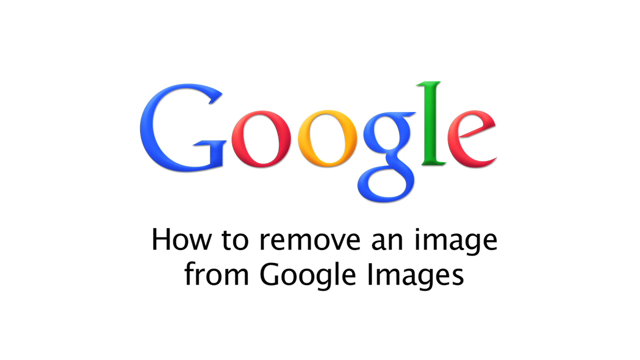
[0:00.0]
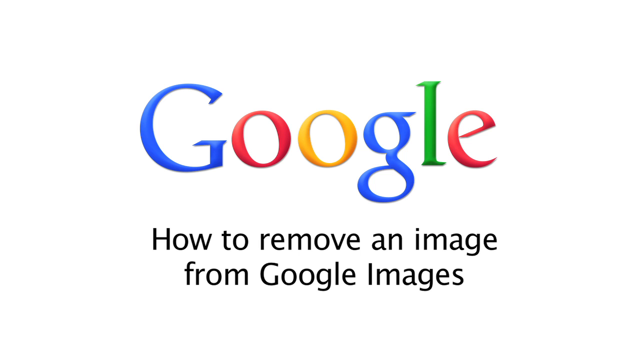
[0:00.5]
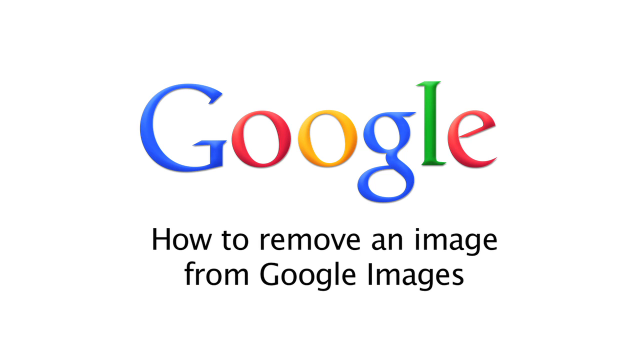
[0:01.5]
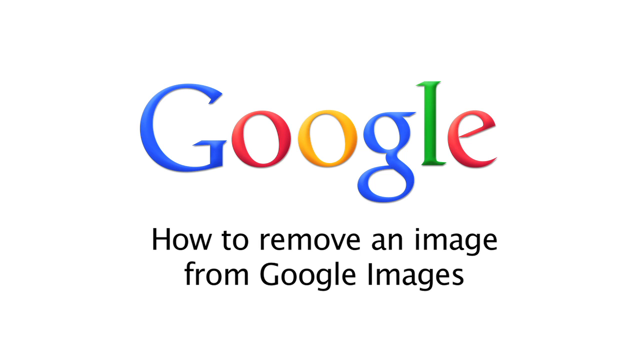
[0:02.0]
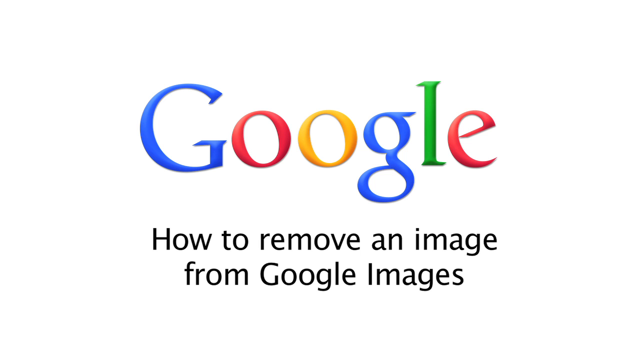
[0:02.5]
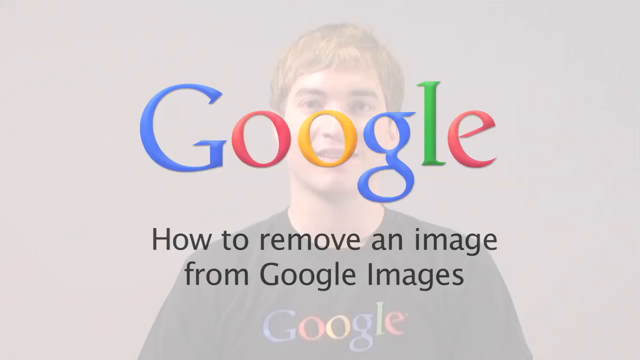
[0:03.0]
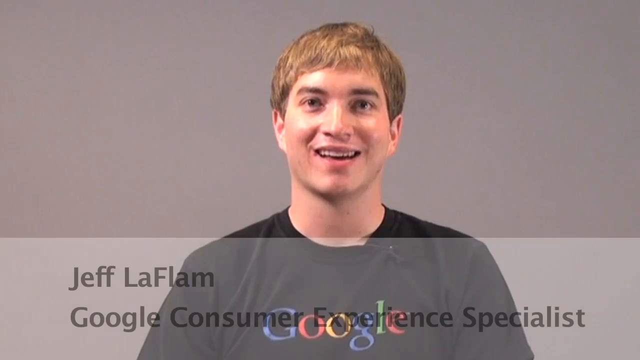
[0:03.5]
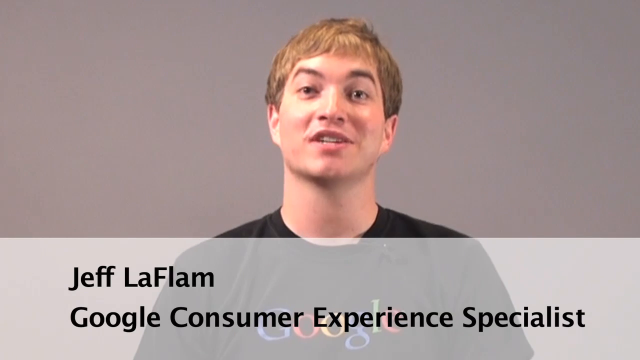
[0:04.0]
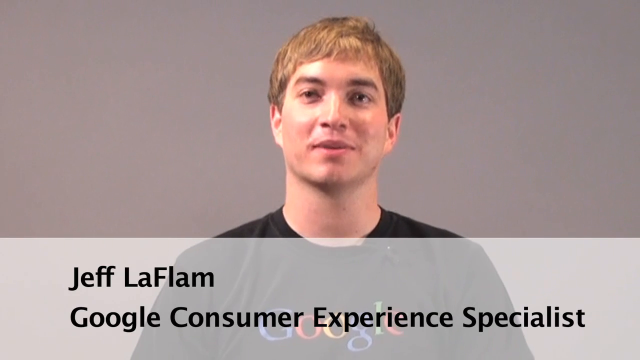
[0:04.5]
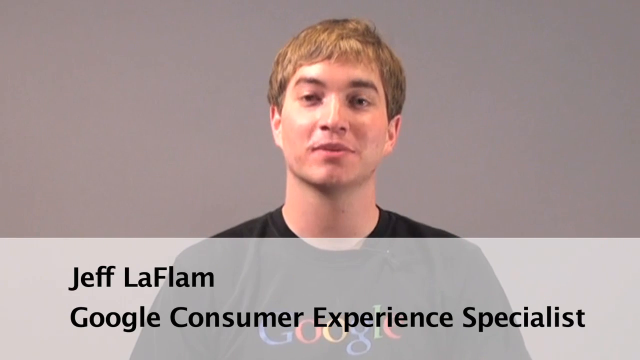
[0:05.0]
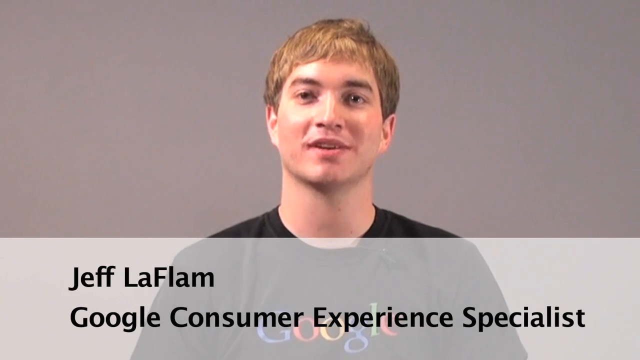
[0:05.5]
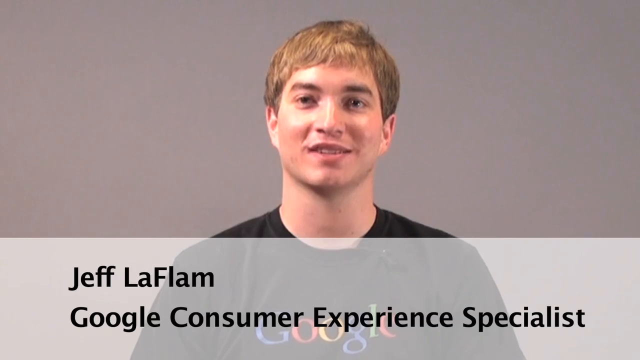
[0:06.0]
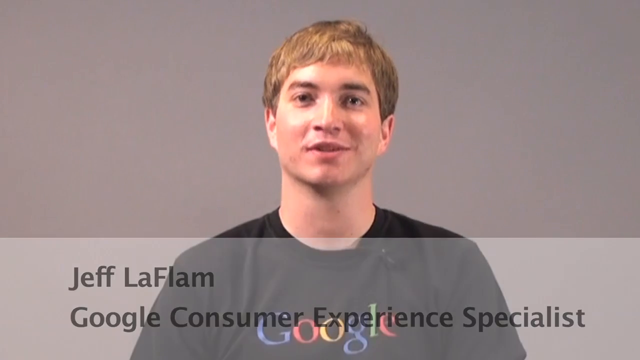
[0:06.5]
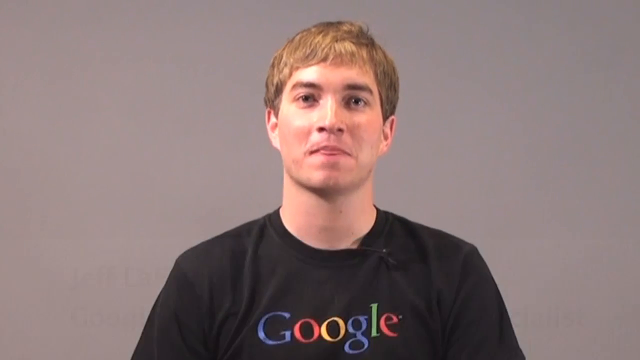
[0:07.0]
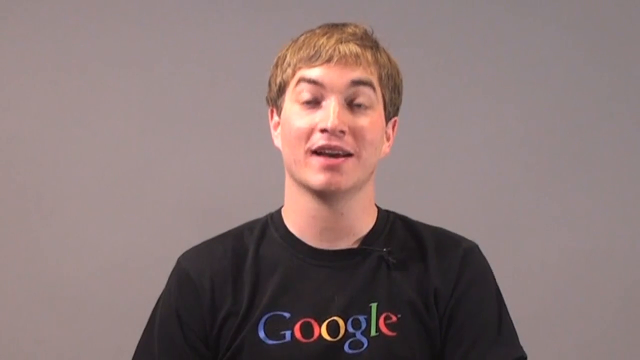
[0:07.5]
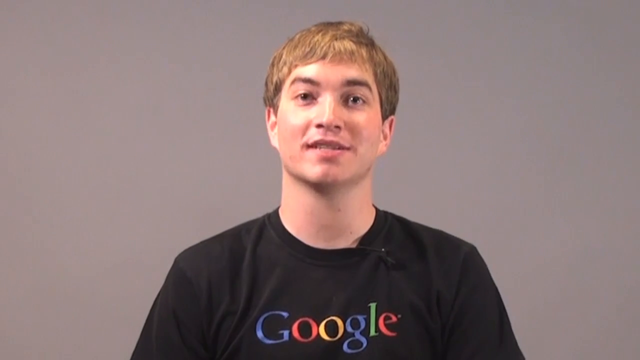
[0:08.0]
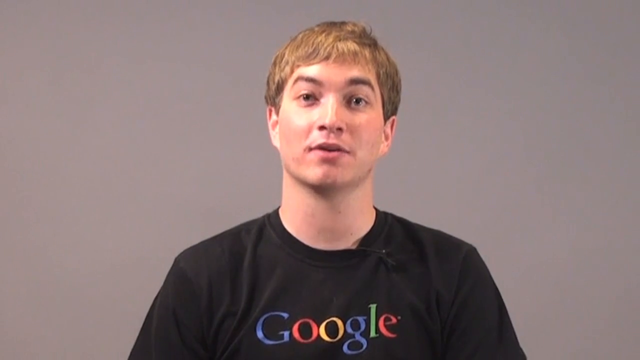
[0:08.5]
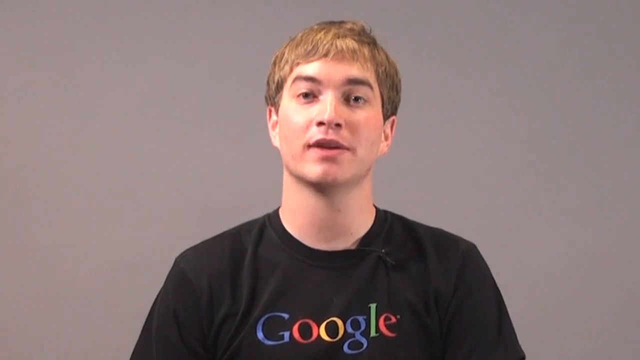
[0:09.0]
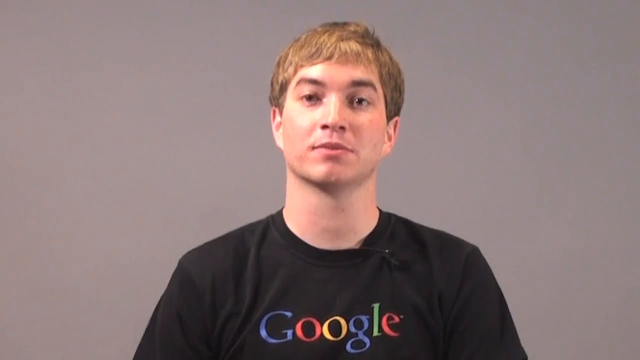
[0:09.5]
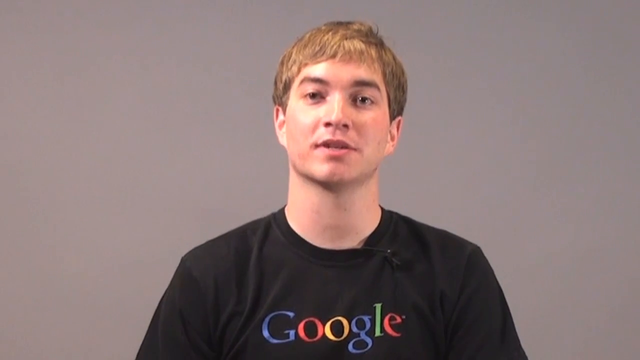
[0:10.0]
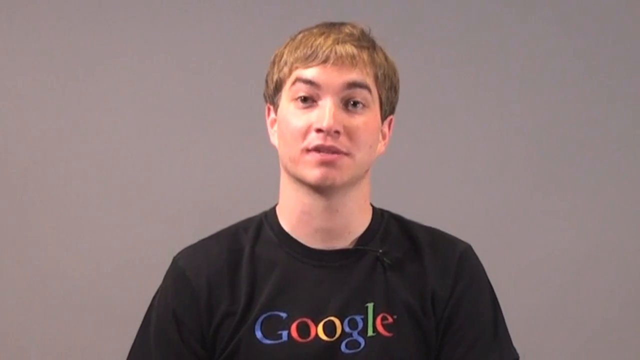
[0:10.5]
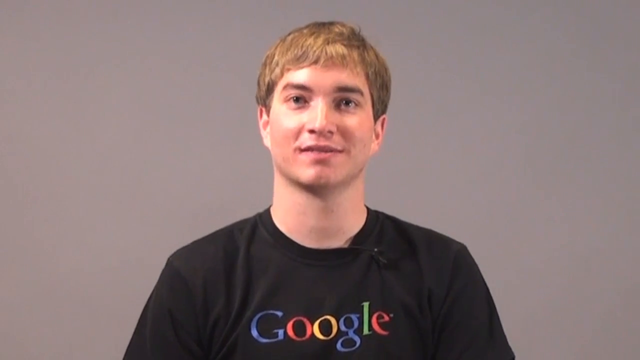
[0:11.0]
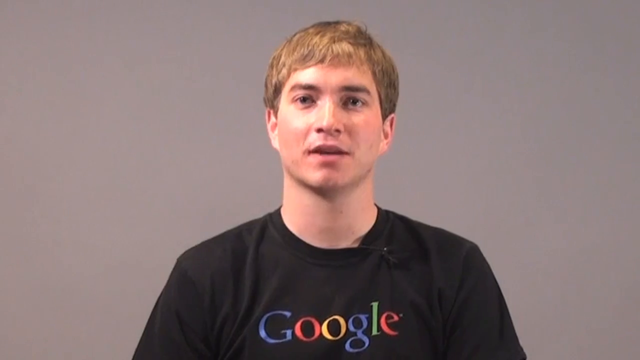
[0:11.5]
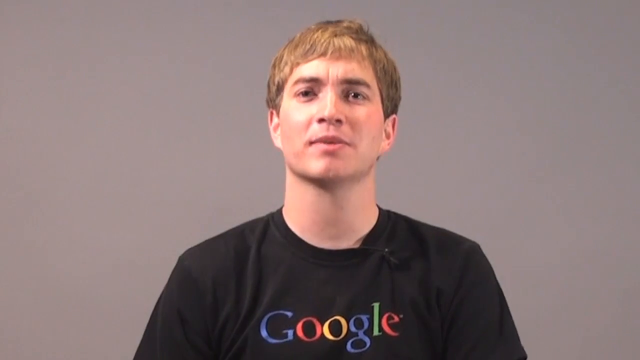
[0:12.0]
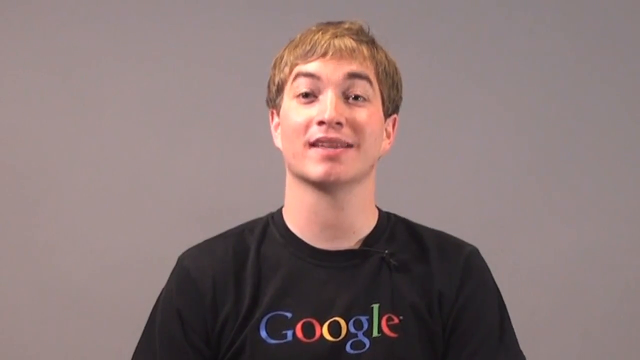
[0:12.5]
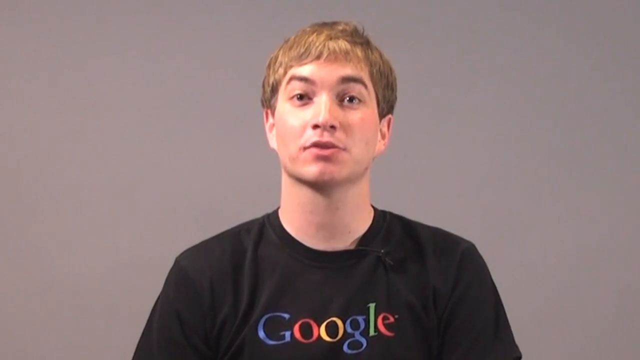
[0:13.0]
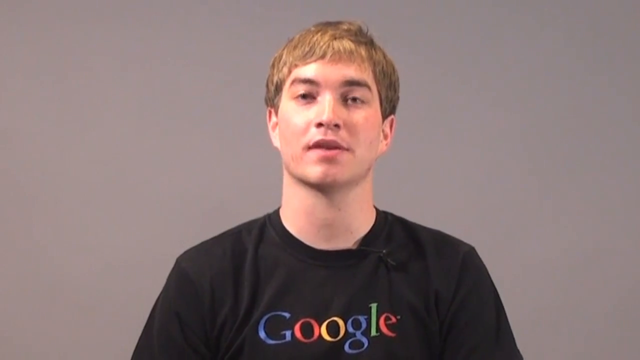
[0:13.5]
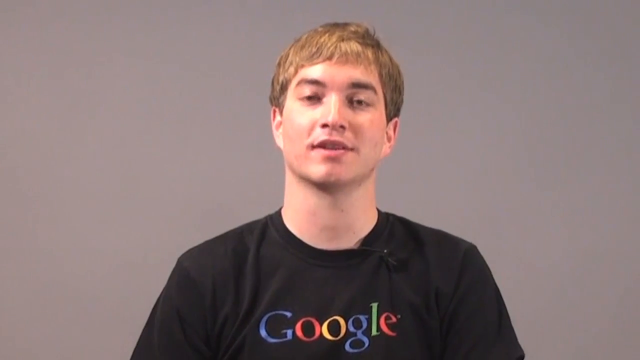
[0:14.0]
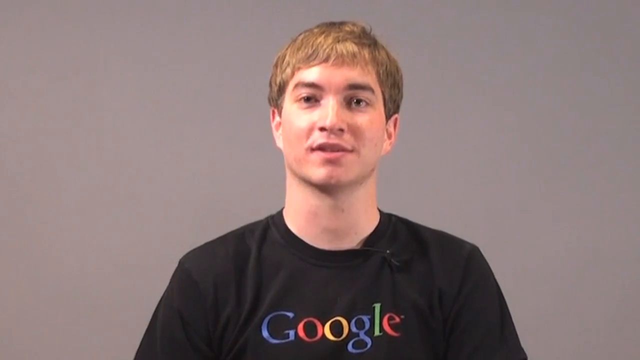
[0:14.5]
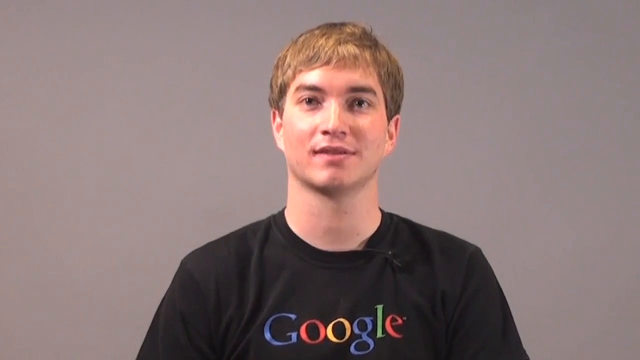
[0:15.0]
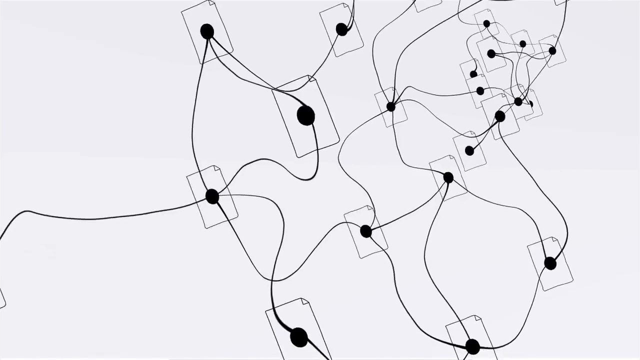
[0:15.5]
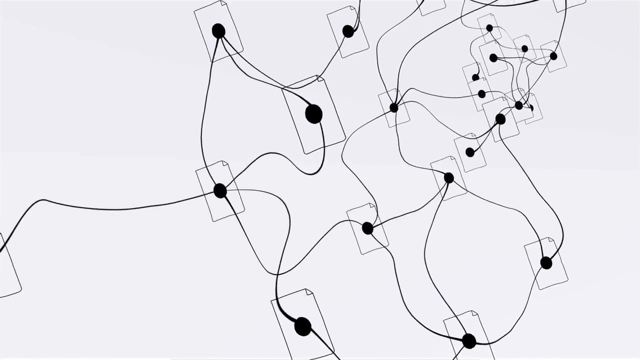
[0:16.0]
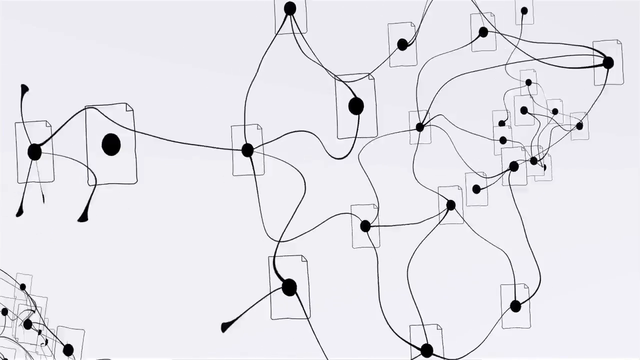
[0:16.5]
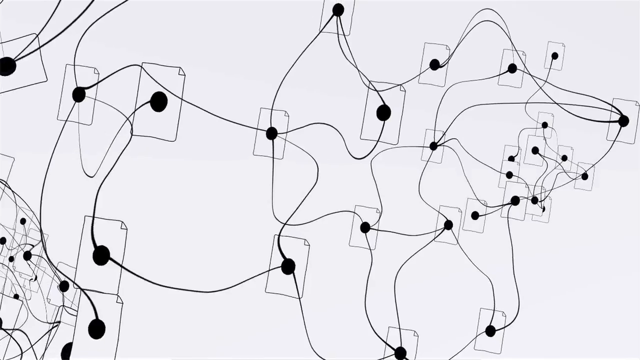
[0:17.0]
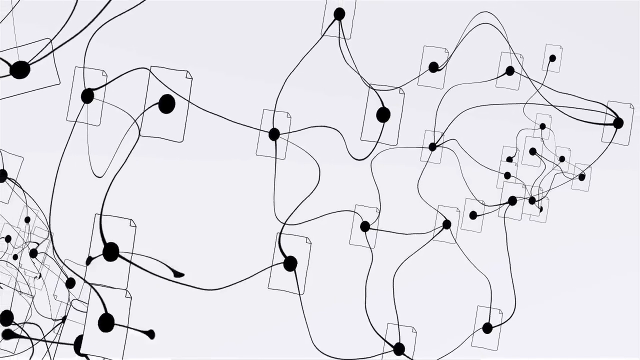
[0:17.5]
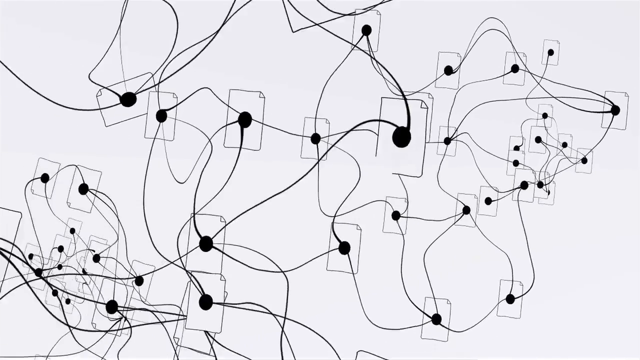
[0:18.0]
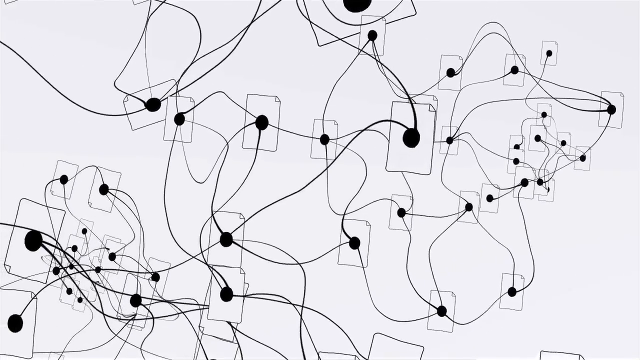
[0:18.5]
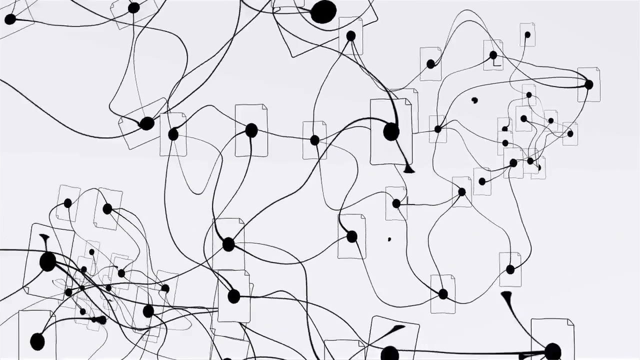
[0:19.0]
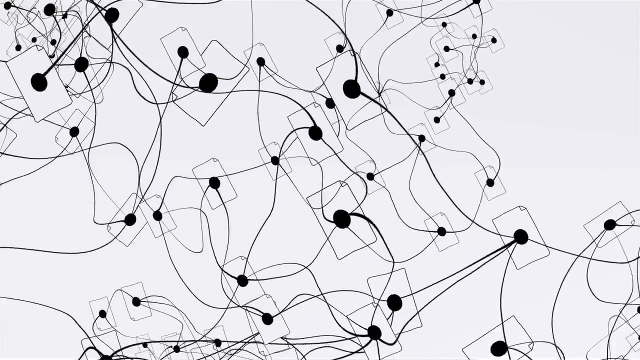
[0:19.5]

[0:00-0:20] The video opens on a white screen reading "Google, how to remove an image from Google Images." The screen fades away to a man, identified by an overlay below him as Jeff. The overlay is a white, semi-transparent square or rectangle at the bottom that reads "Jeff Laflamme" and identifies him as a Google consumer experience specialist. The overlay fades away and the man continues to talk. He has dark blonde hair, is Caucasian, looks to be in his late 20s, and wears a black top with a Google logo printed on it. He has a relatively friendly expression and moves his eyebrows as he talks, using facial expressions to keep viewers engaged. The video then switches to a white screen with various pages marked with black dots, with lines linking the dots to each other, apparently showing some kind of network system.